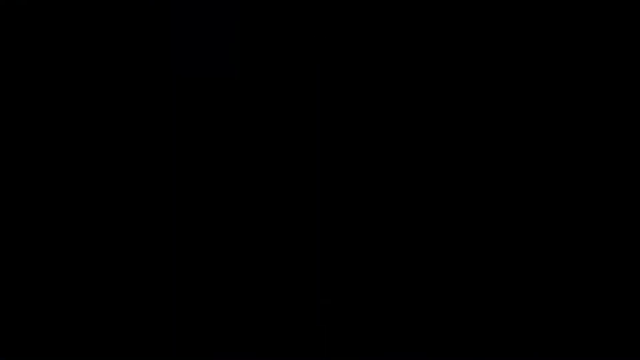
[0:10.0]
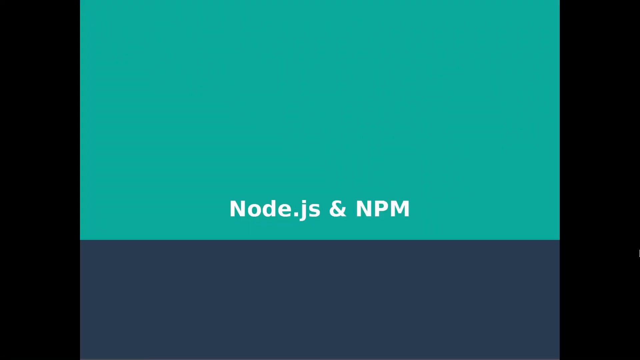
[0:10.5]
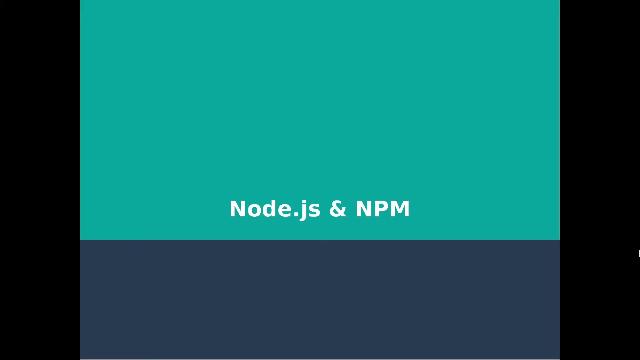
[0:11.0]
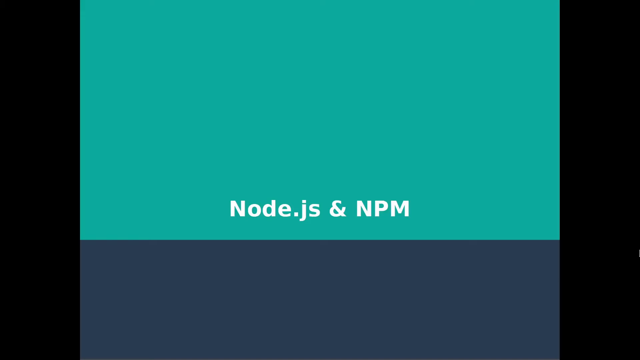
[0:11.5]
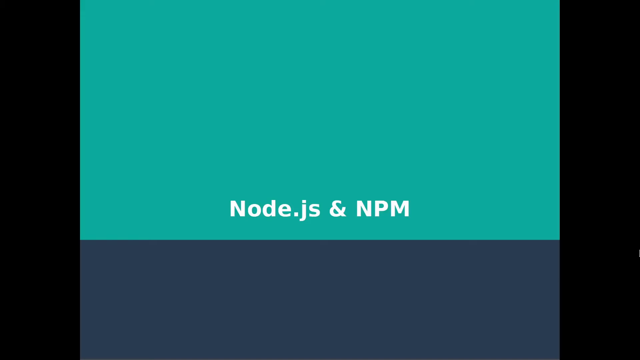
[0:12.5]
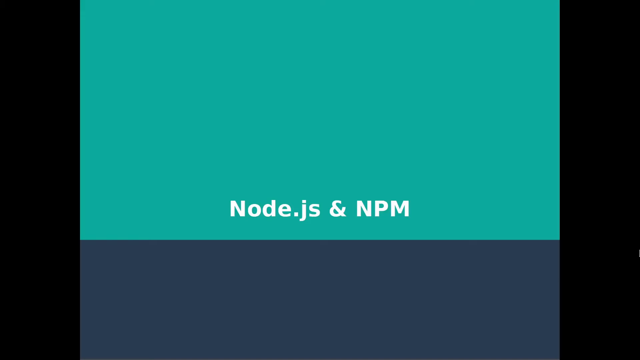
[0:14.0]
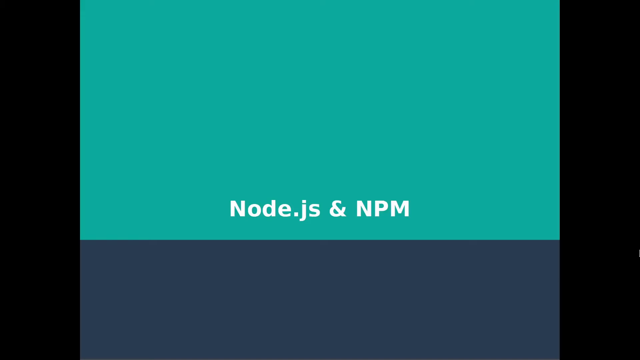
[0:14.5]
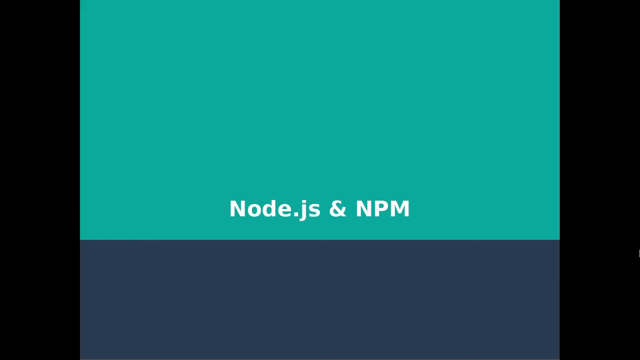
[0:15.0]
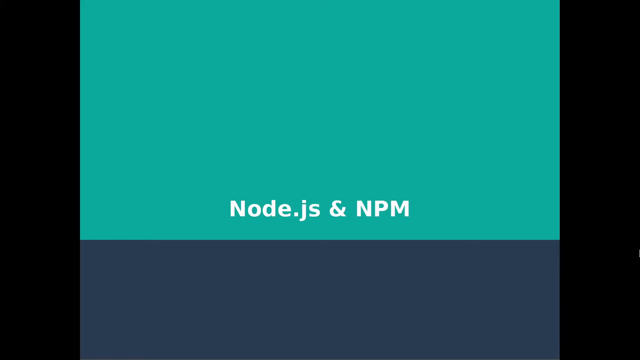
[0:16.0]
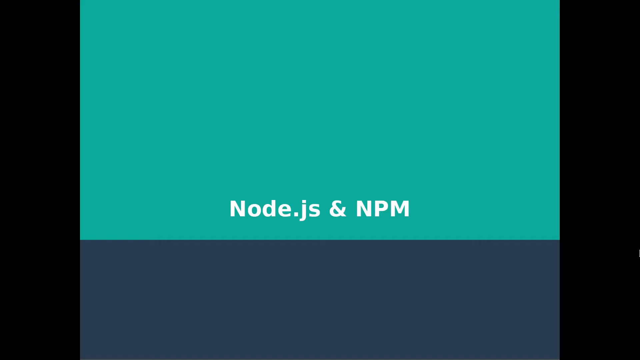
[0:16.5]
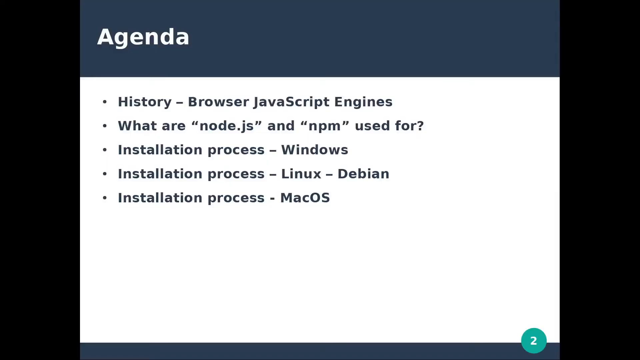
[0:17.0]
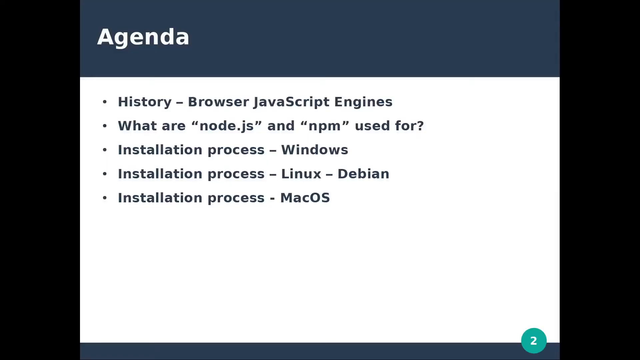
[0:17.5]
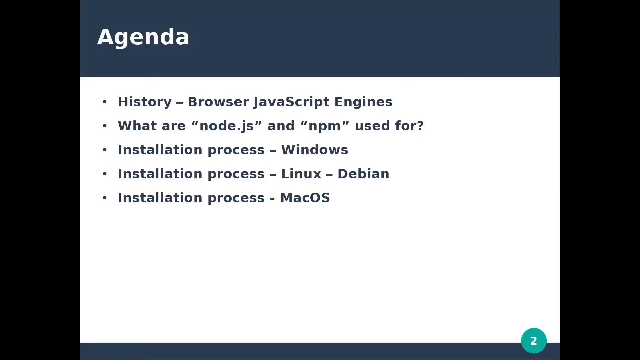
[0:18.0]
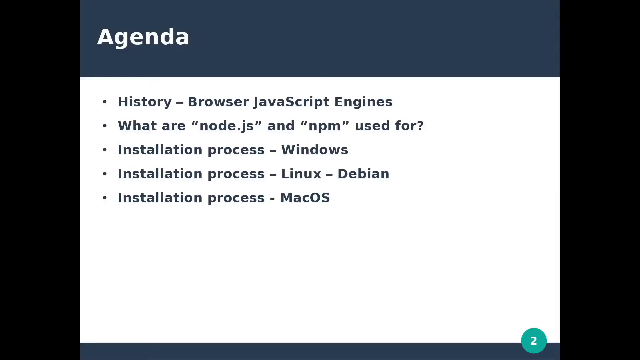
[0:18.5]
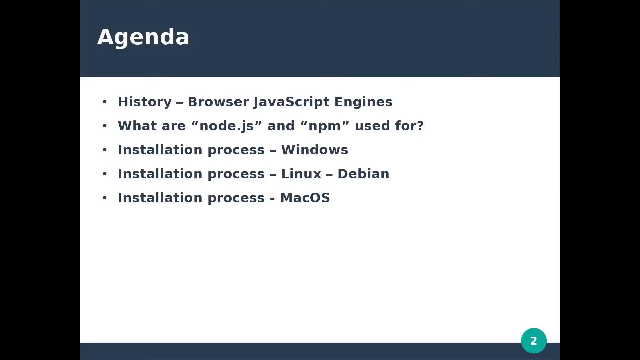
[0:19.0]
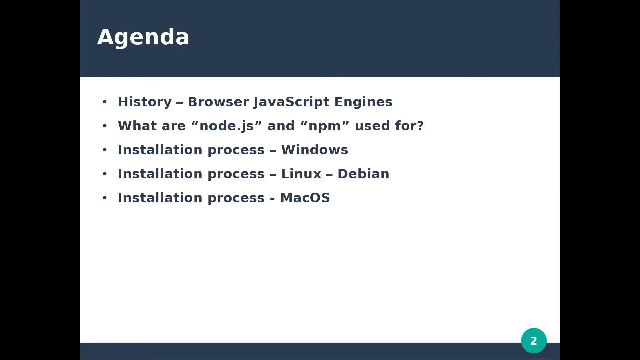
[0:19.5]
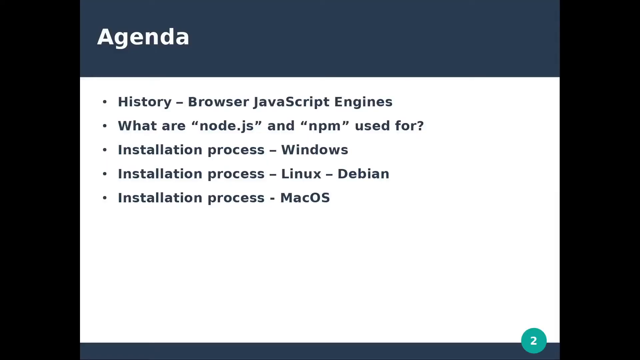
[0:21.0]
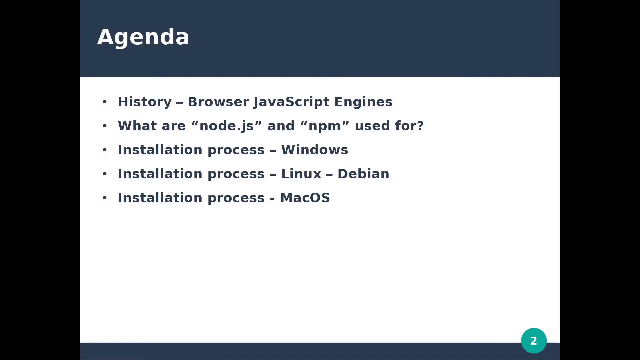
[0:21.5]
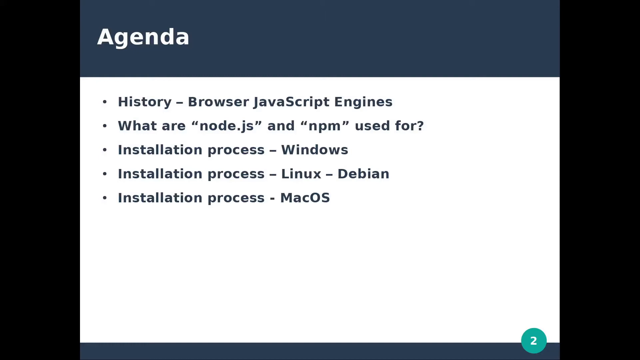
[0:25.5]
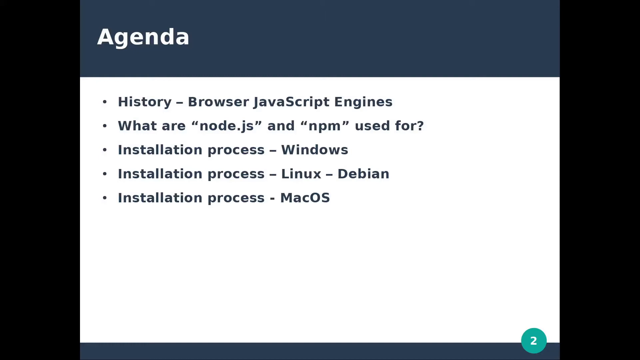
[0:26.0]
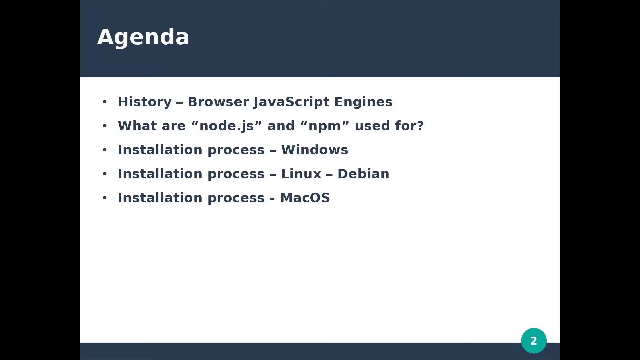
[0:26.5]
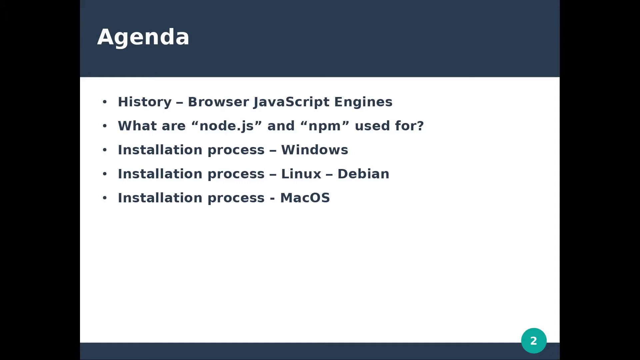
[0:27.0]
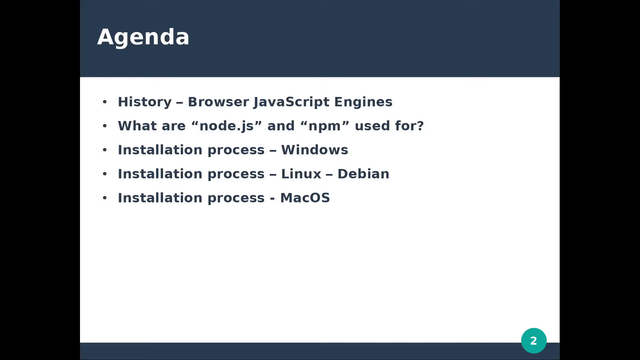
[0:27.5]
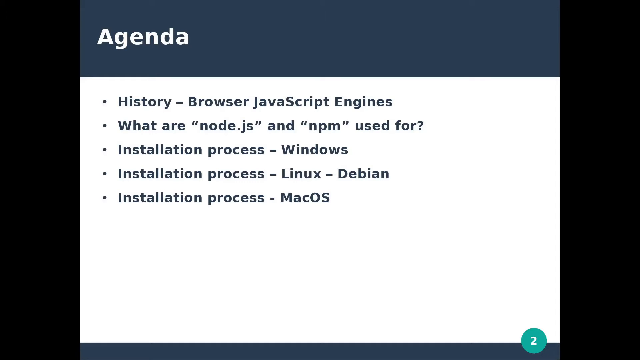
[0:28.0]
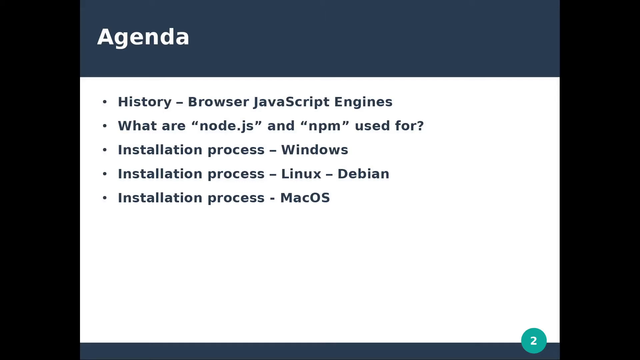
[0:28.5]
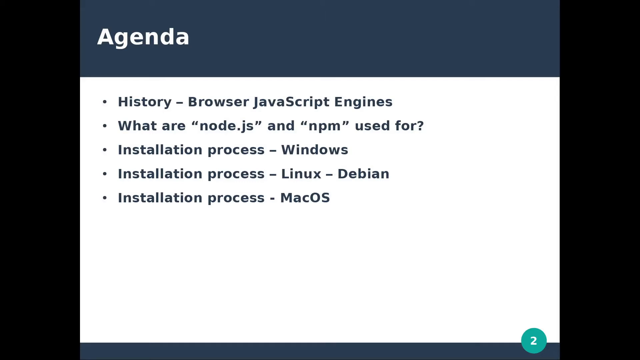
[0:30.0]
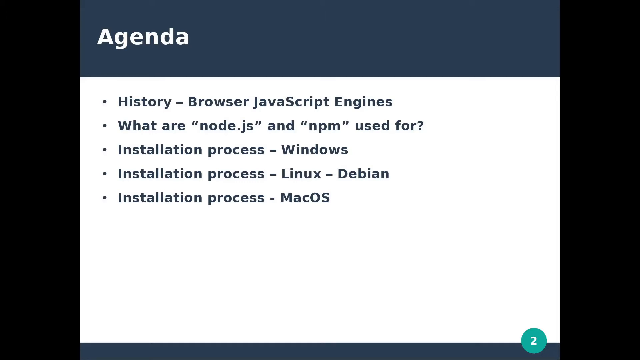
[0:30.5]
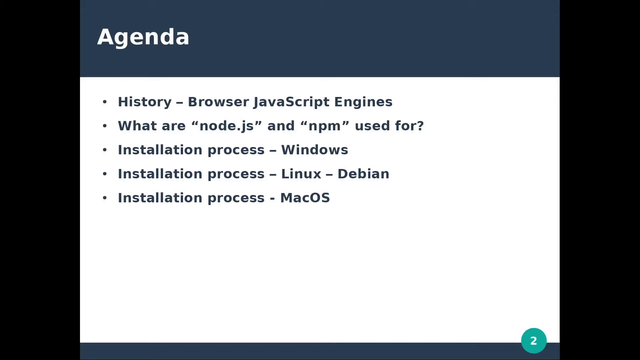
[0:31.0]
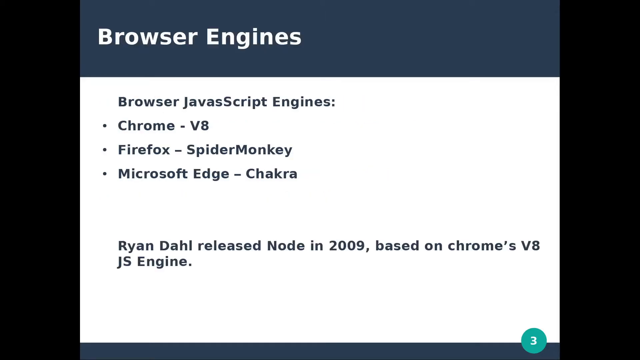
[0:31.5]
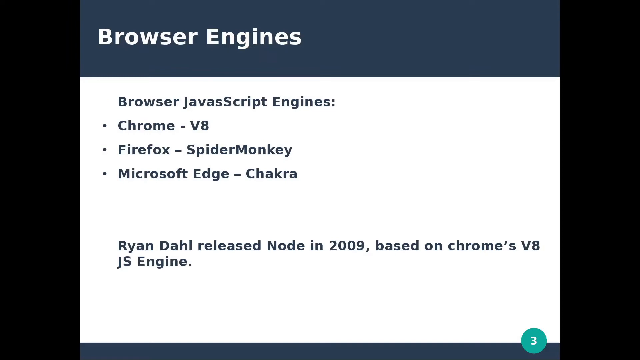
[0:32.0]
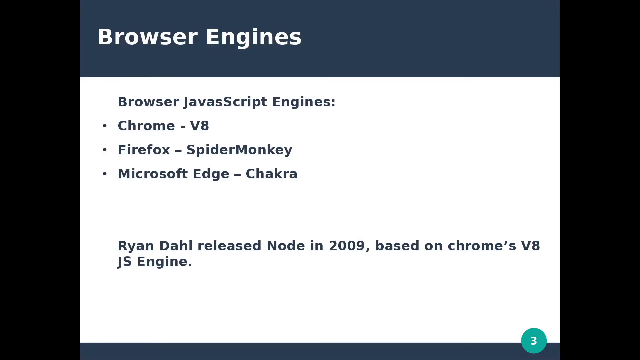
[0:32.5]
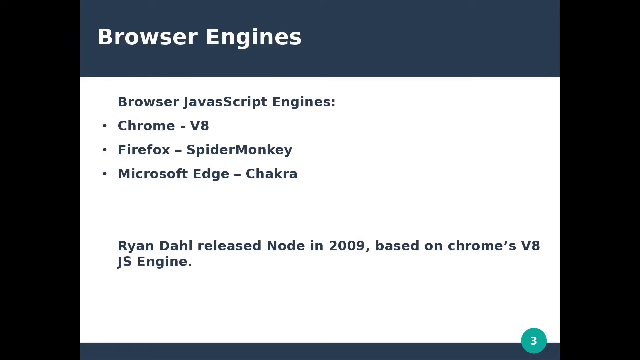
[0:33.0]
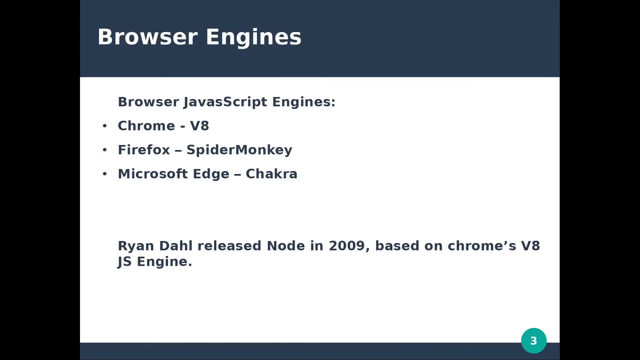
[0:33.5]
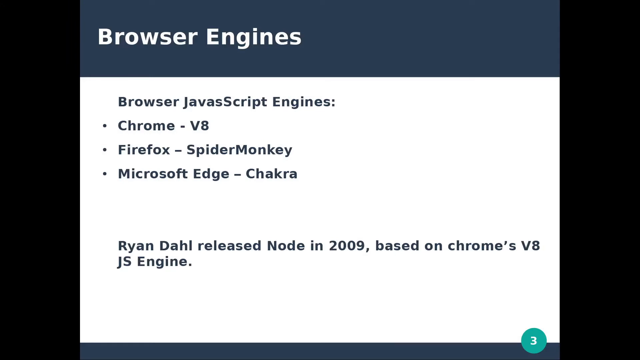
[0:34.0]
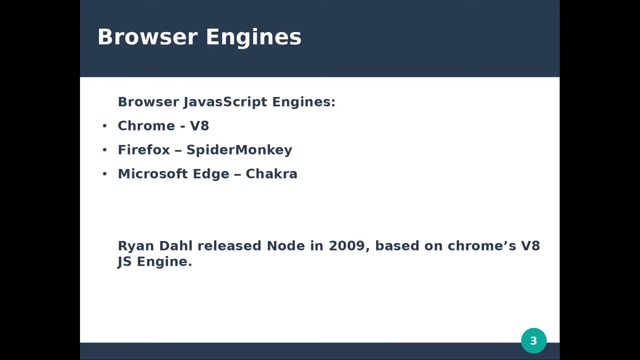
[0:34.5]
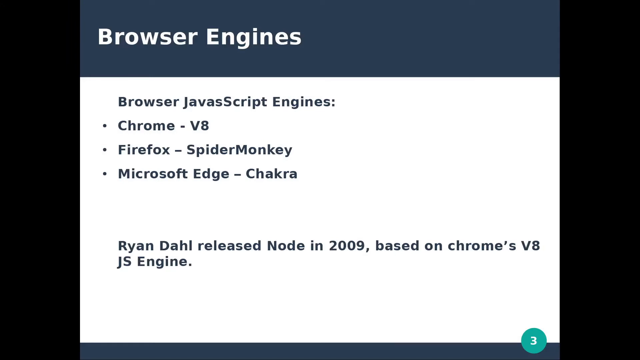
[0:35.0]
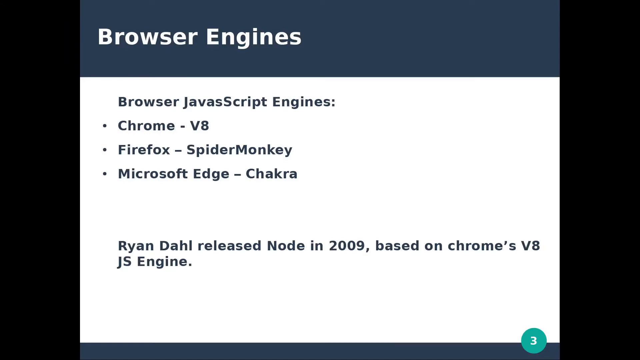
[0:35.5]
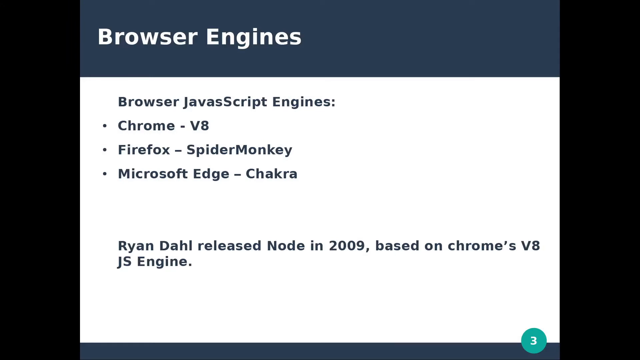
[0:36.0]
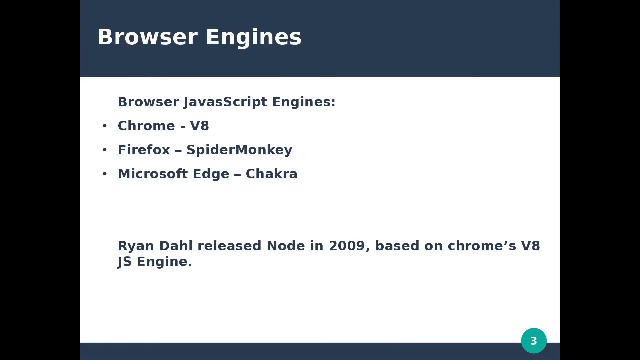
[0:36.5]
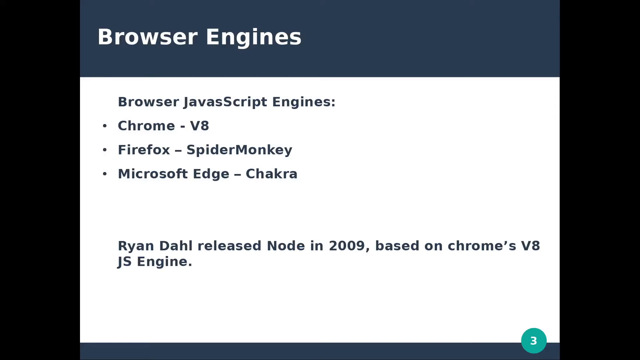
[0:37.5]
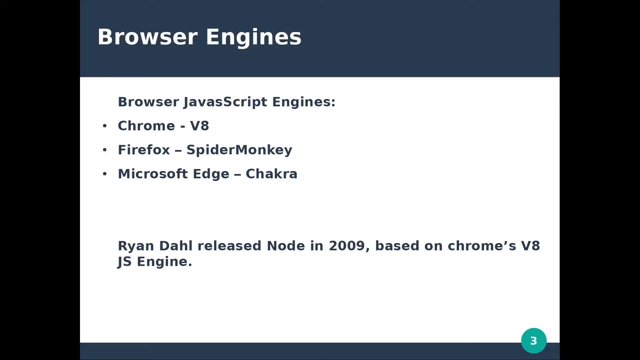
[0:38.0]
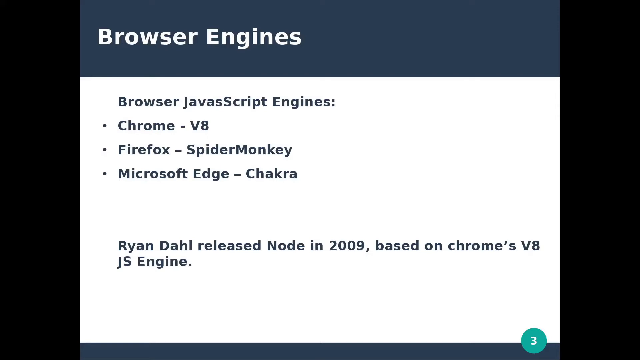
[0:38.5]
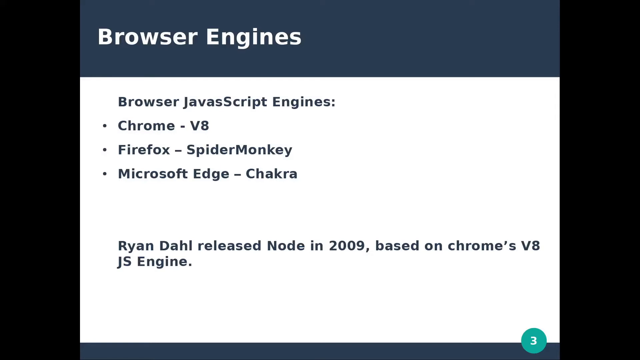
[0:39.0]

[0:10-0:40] A blue-green background with white lettering reads "Node.js & NPM", with black stripes along either side and a darker blue strip beneath the lettering. Next comes a screen headed "Agenda" with five bullet points beneath it: "history - browser JavaScript engines", "what are "Node.js" and "NPM" used for?", "installation process - Windows", "Installation process - Linux - Debian" and "installation process - Mac OS". The heading is dark blue with white lettering, the body is white with black lettering, and there are black borders along the sides. The following screen has the heading "Browser Engines" and the text "Browser JavaScript Engines: Chrome - v8, Firefox - SpiderMonkey, Microsoft Edge - Chakra", with a subtext reading "Ryan Dahl released Node in 2009 based on Chrome's V8 JS Engine".